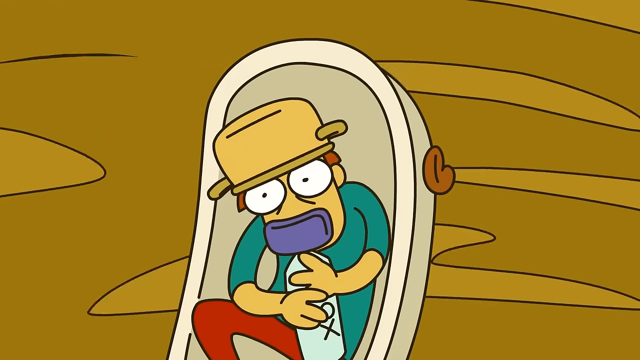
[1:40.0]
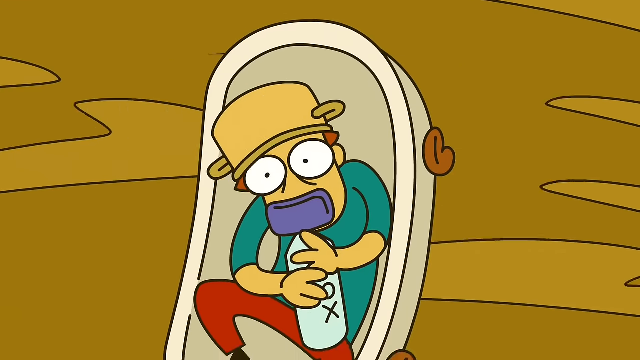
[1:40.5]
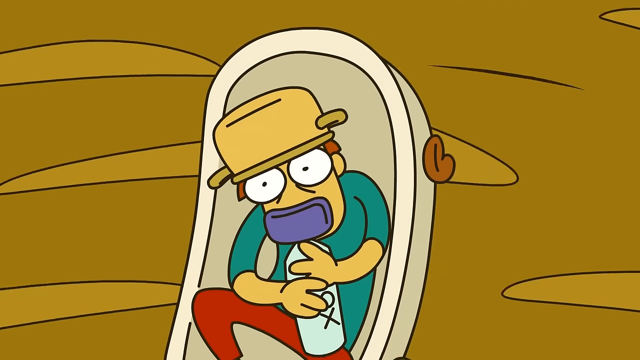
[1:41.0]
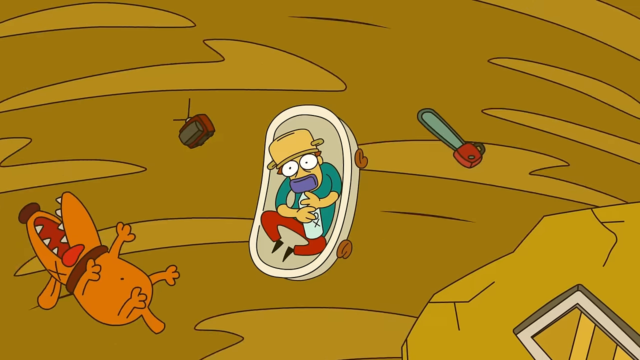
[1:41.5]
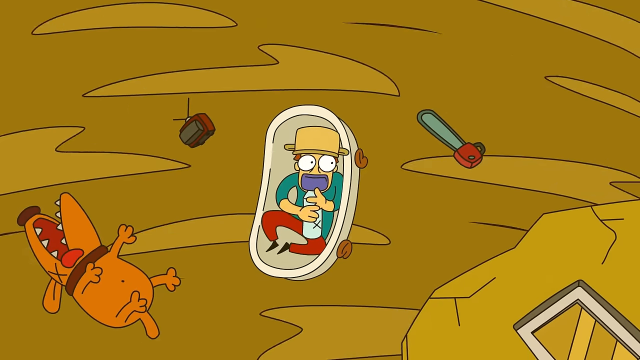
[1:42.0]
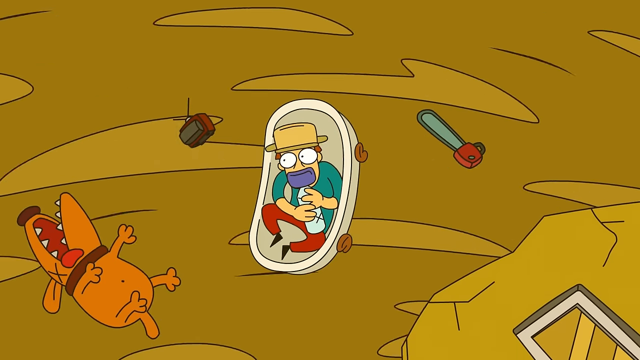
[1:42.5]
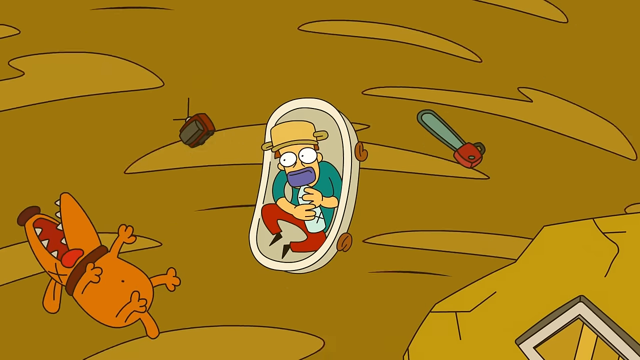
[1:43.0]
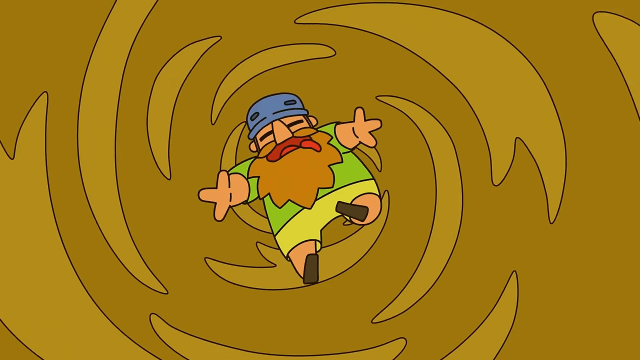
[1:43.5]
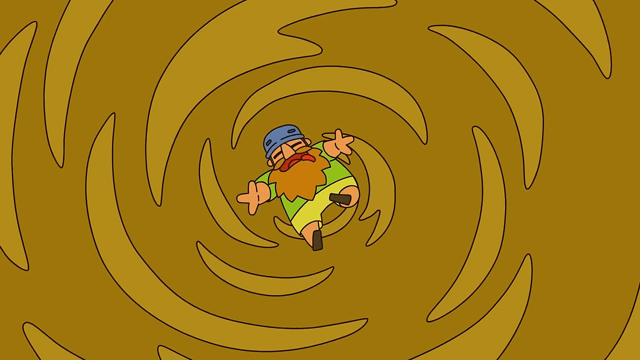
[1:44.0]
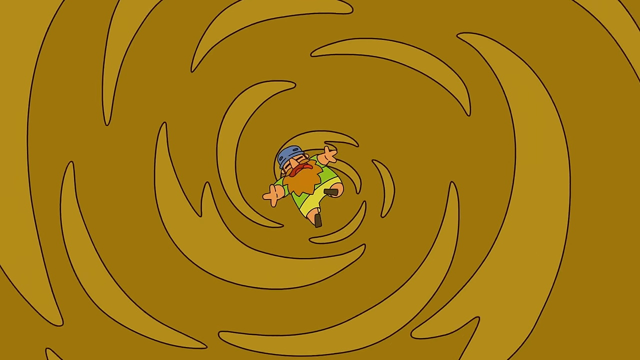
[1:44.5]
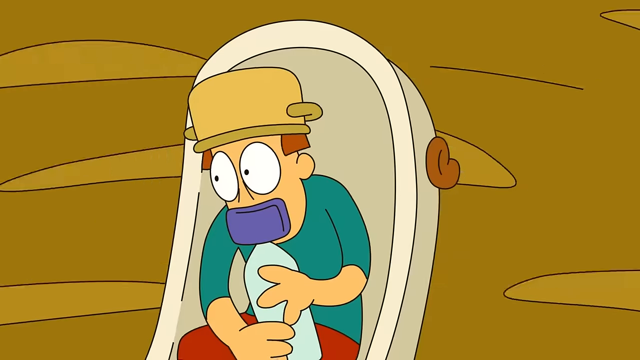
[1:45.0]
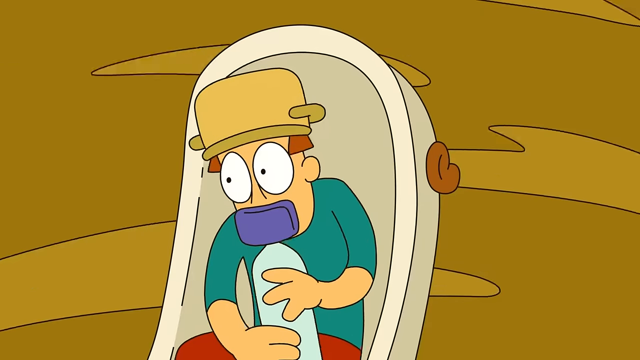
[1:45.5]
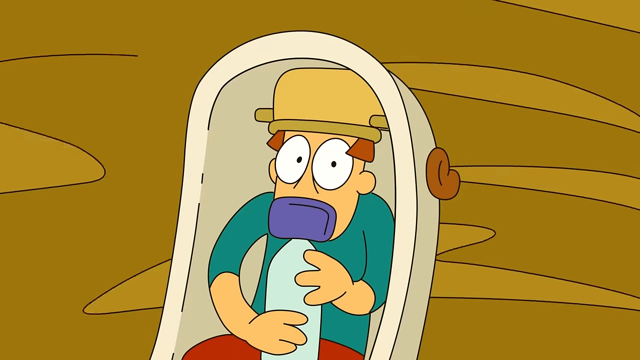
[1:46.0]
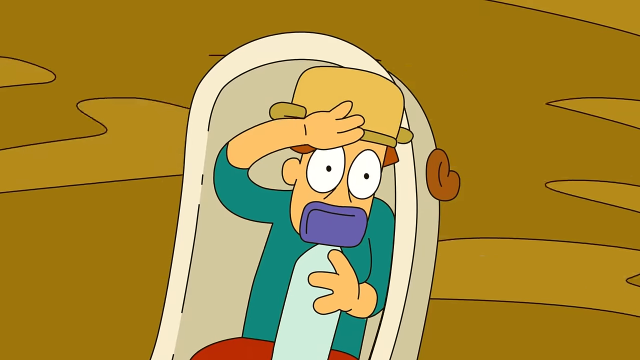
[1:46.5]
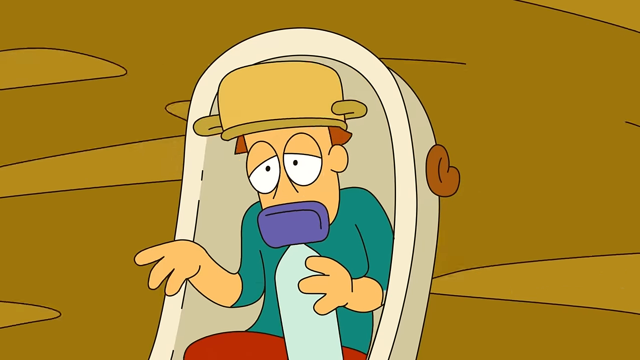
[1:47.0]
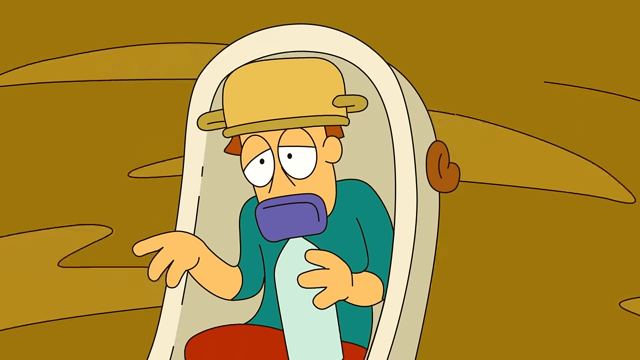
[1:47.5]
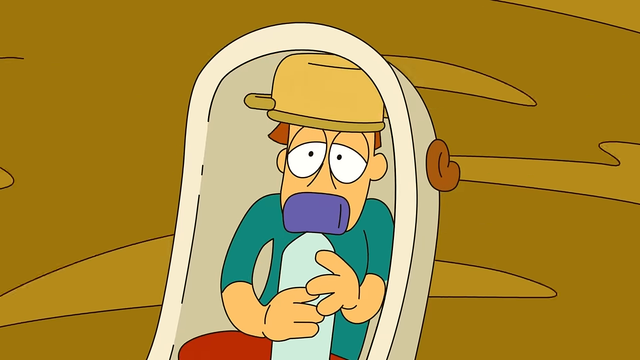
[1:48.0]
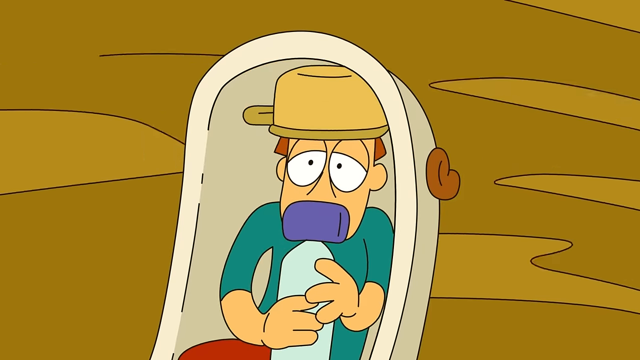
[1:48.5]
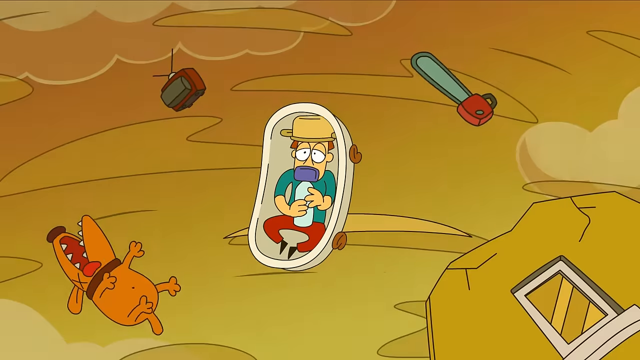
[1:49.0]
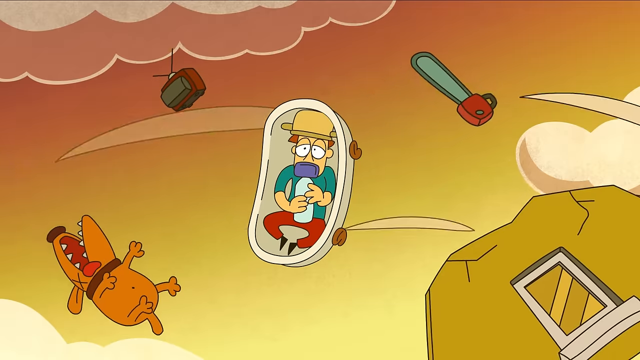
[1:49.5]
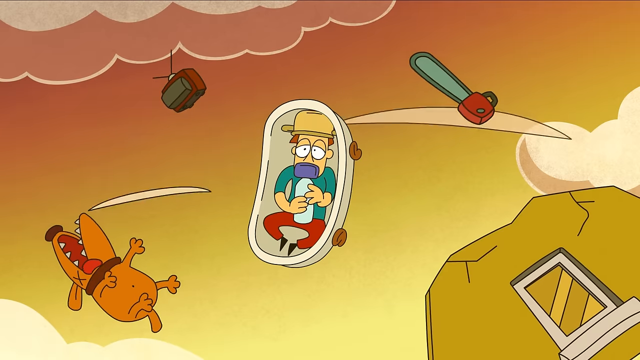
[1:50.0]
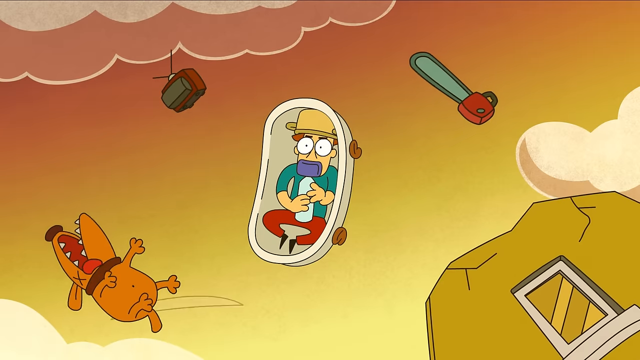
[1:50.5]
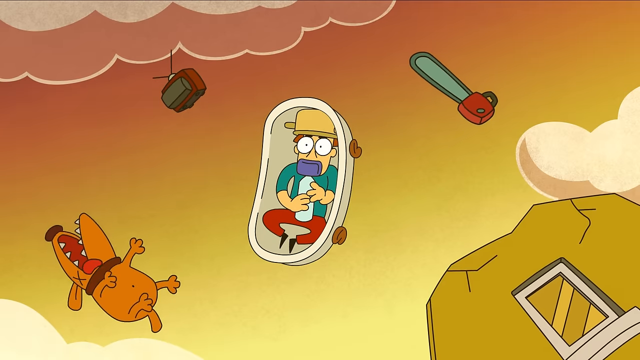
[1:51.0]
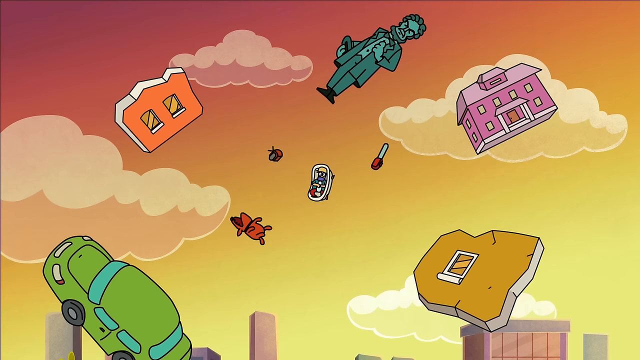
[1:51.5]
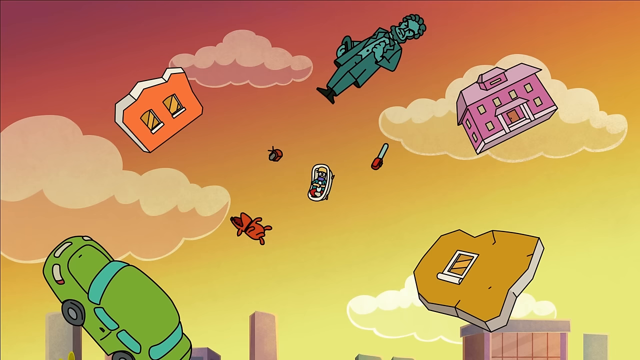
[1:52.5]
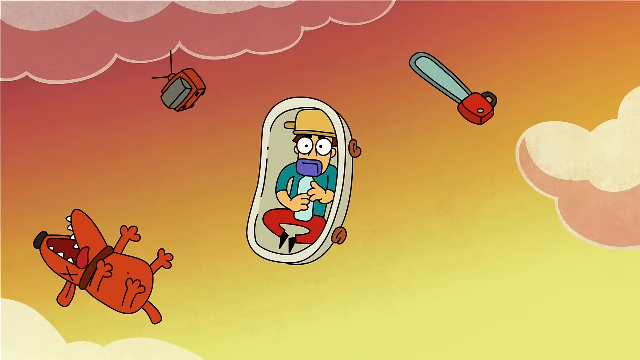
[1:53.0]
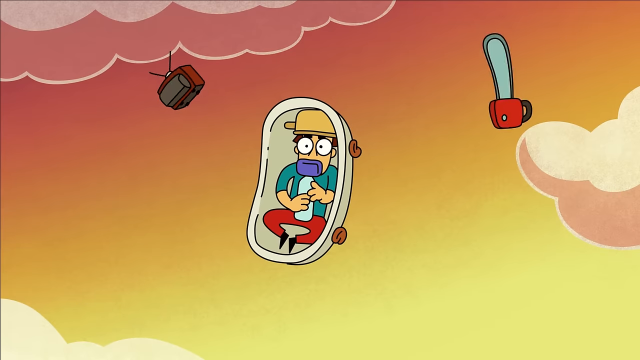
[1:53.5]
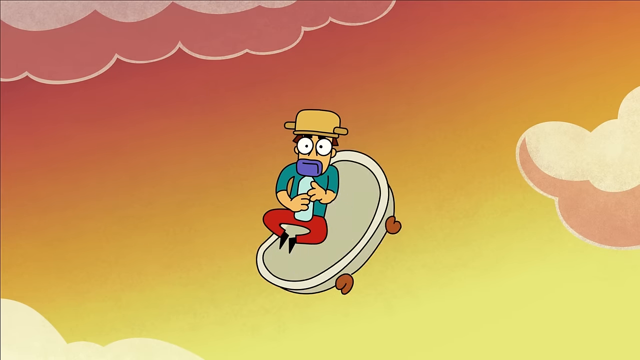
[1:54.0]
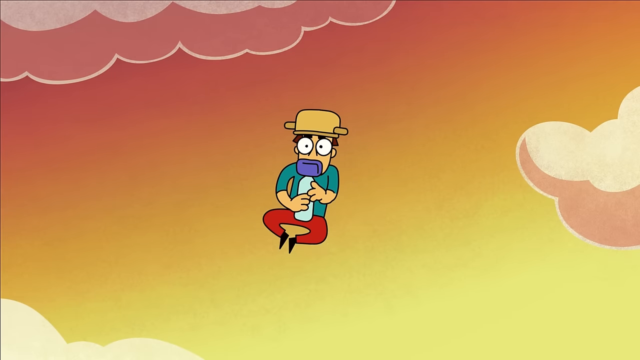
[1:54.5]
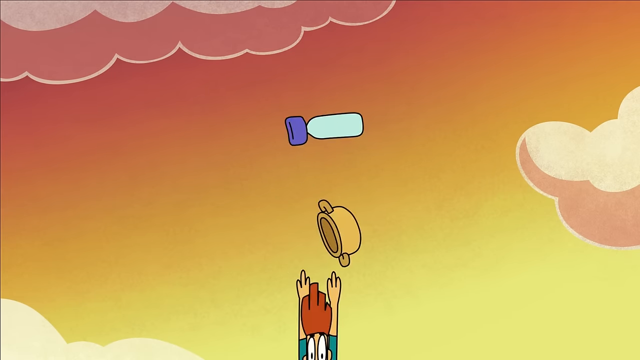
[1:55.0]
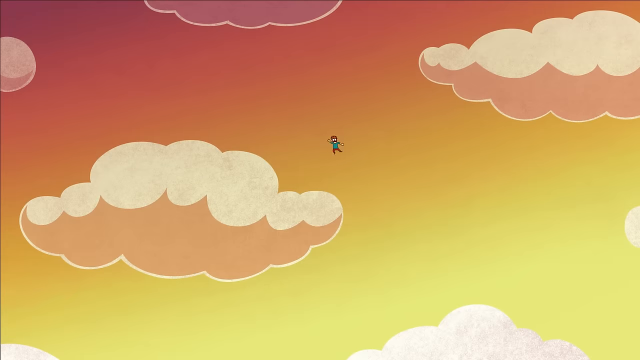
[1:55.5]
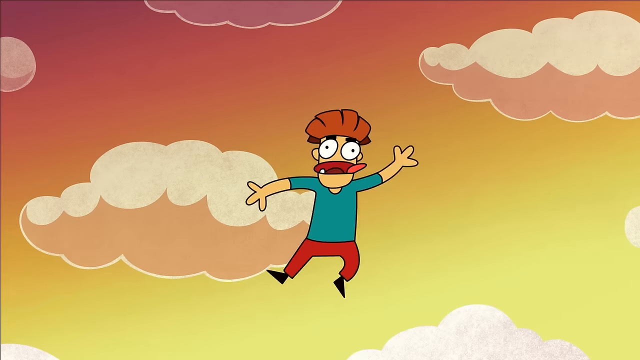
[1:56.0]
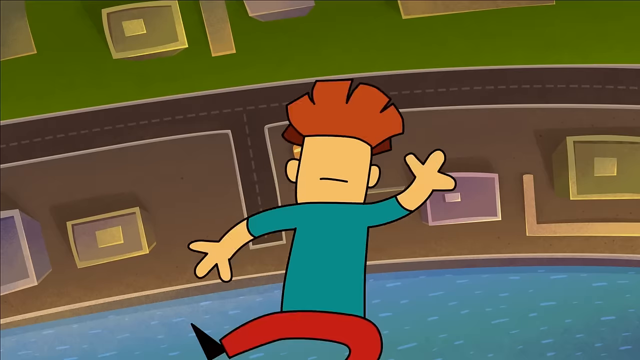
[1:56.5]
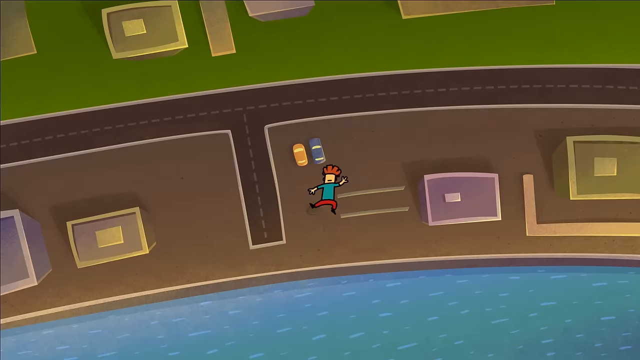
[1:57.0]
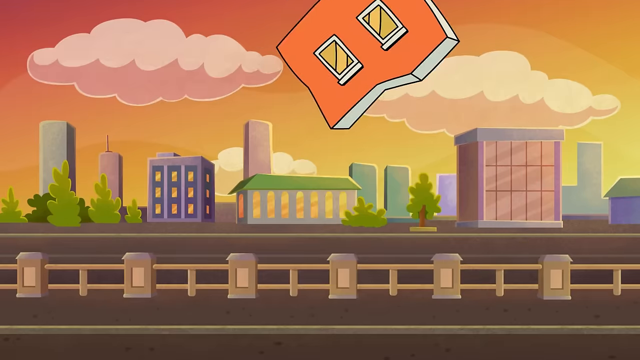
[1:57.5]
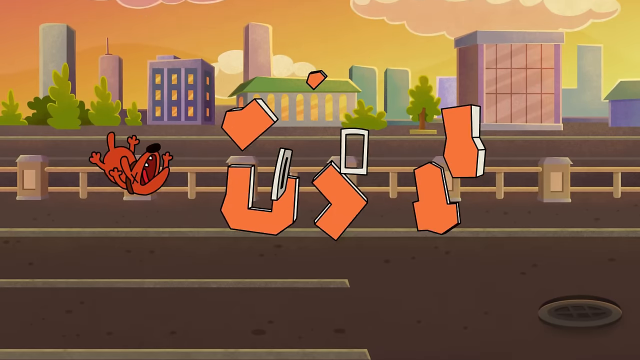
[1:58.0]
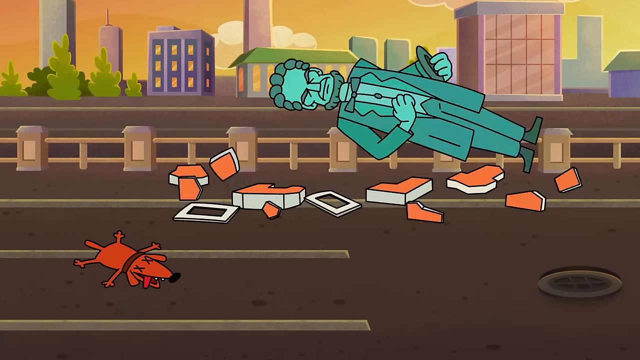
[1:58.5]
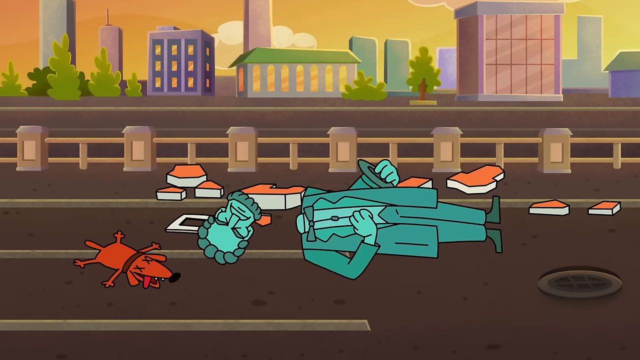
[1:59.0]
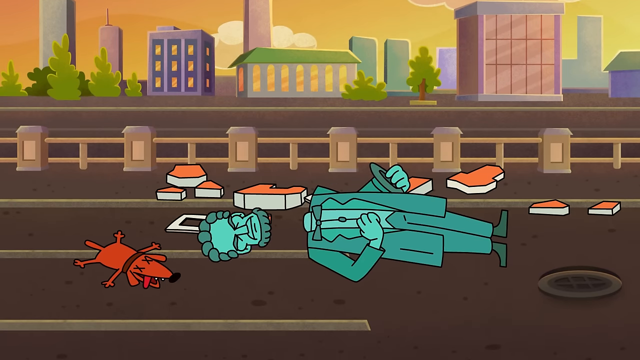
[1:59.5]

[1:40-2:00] A cartoonish character with brown hair, a short-sleeved teal green shirt and red pants holds some kind of bottle up to his mouth and looks like he is breathing in some kind of substance. The bottle is white with "OX" on the side in black text, and the piece attached to it at his mouth is purple. He is sitting in a bathtub with a pot on his head. The camera zooms out a little. A brown cartoonish dog with a darker brown collar and darker brown nose is in the bottom left corner of the screen. A saw and a TV are also floating around with the character in a vortex-looking scene, probably a tornado. After a scene change, another cartoon character with tan skin is in the center of the screen, wearing some kind of purple hat, a green short-sleeved shirt, lime green shorts and brown shoes; he floats in the vortex, shrinking as he moves away from the camera. Then the character with the pot on his head is shown sitting in the tub again. He puts his right hand over his eyes as if trying to see better and does not look too happy.